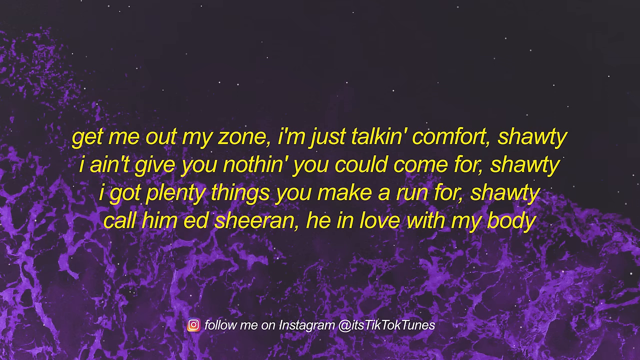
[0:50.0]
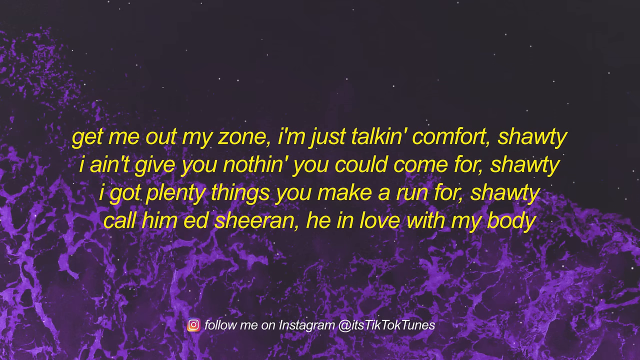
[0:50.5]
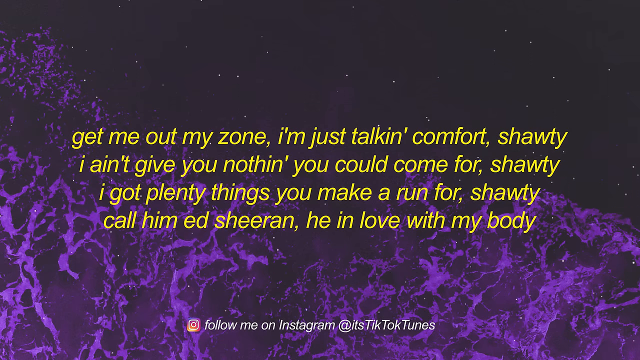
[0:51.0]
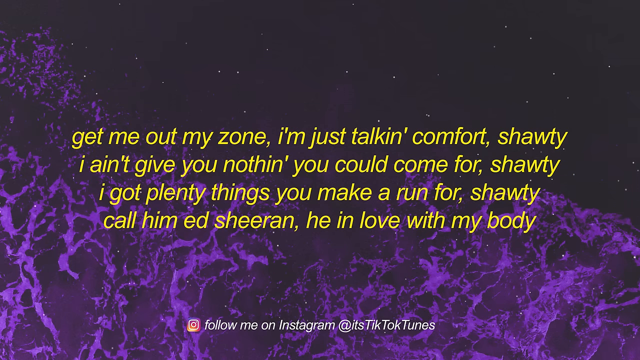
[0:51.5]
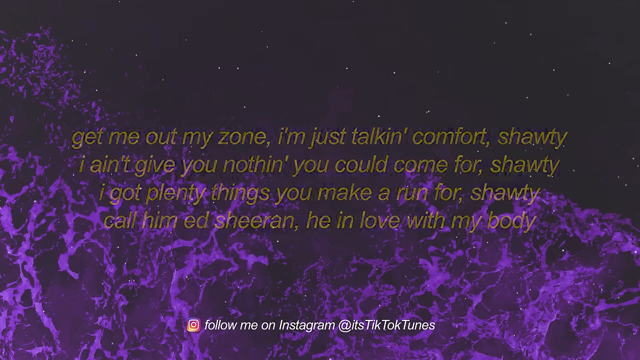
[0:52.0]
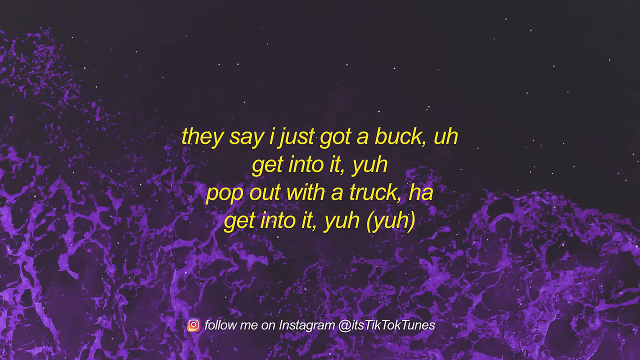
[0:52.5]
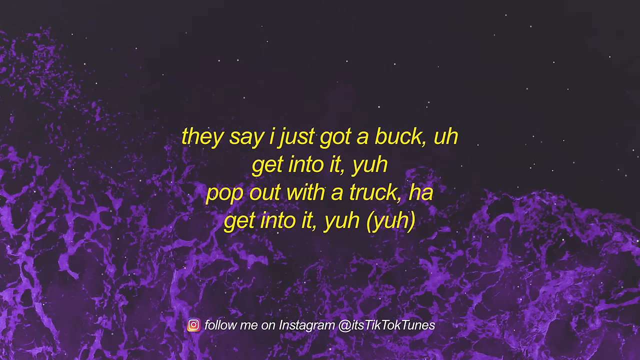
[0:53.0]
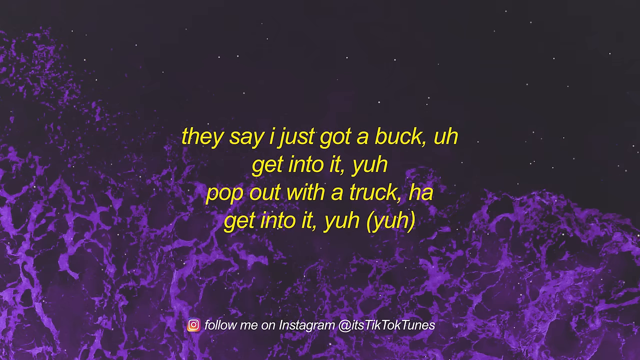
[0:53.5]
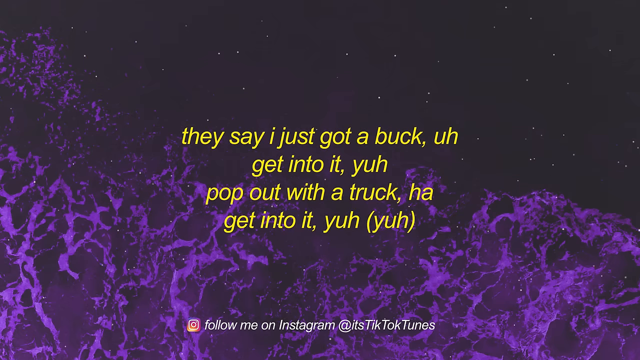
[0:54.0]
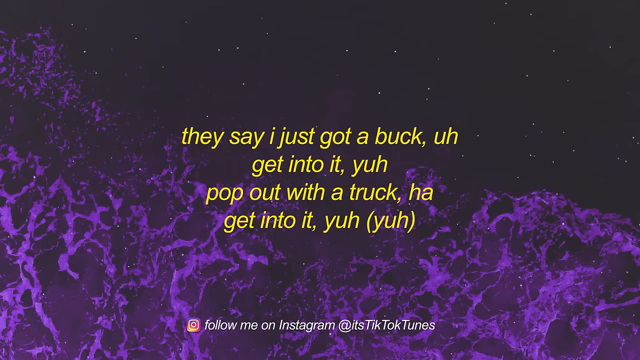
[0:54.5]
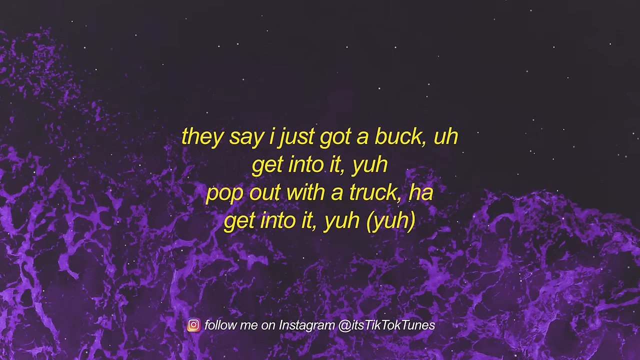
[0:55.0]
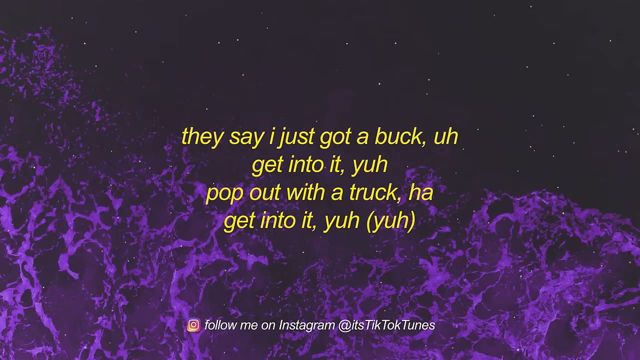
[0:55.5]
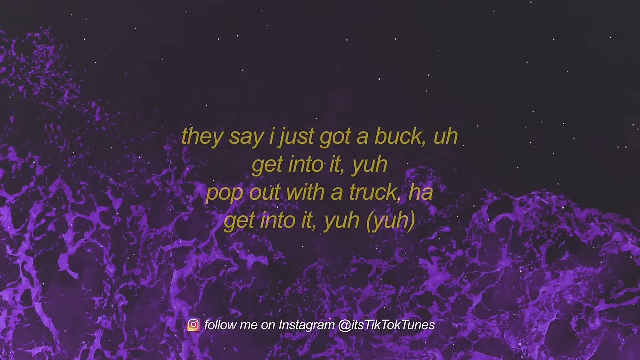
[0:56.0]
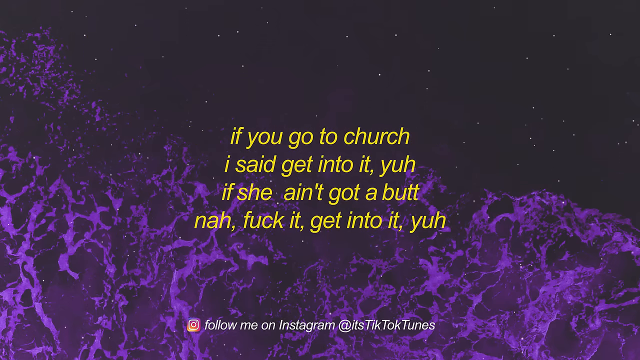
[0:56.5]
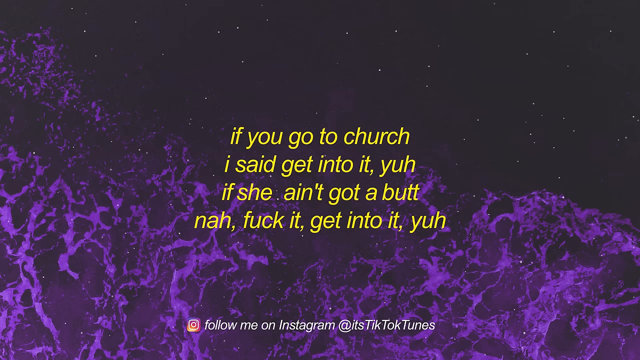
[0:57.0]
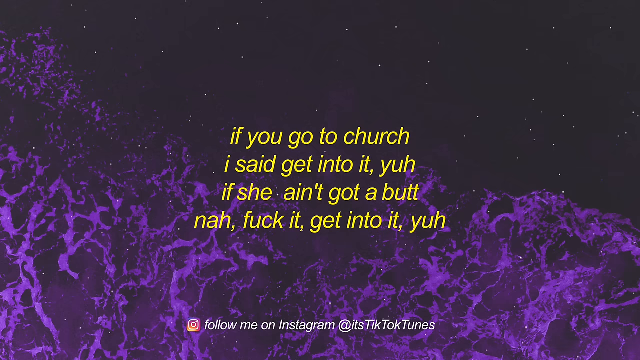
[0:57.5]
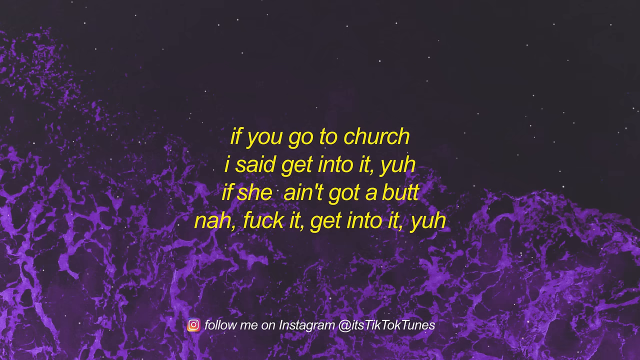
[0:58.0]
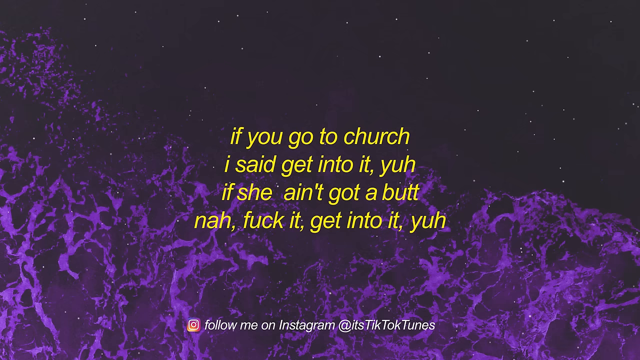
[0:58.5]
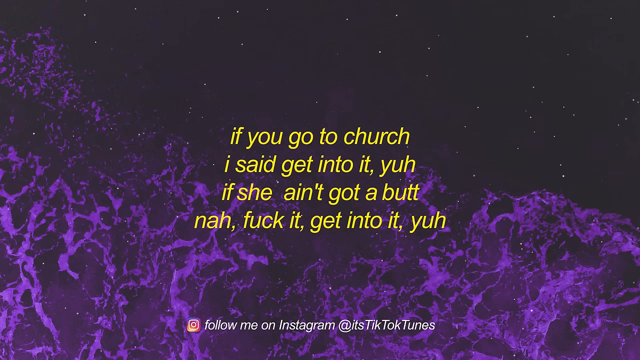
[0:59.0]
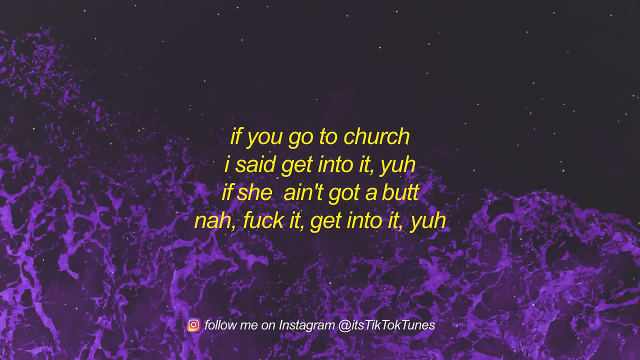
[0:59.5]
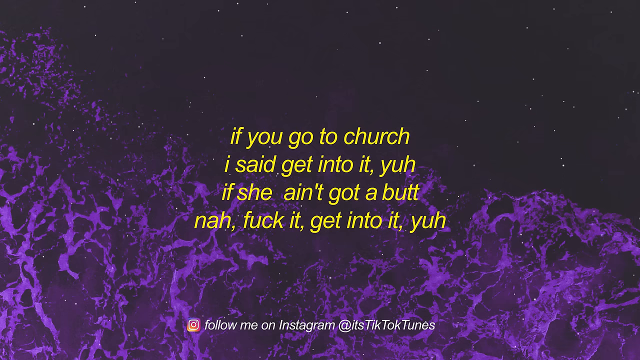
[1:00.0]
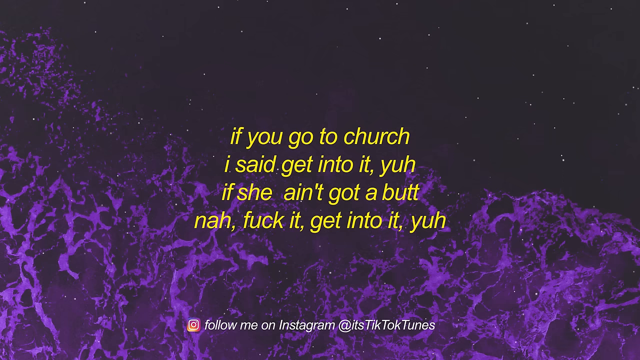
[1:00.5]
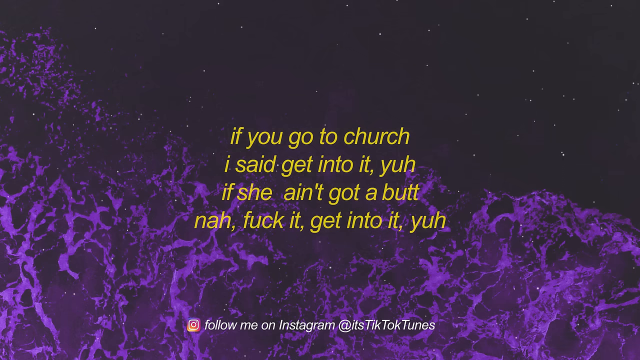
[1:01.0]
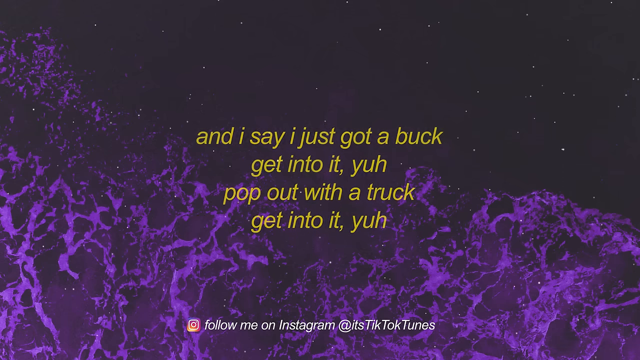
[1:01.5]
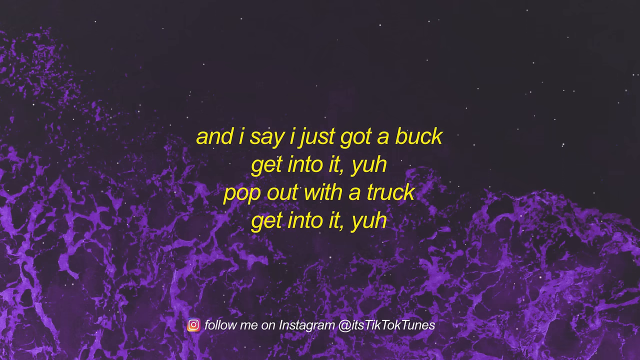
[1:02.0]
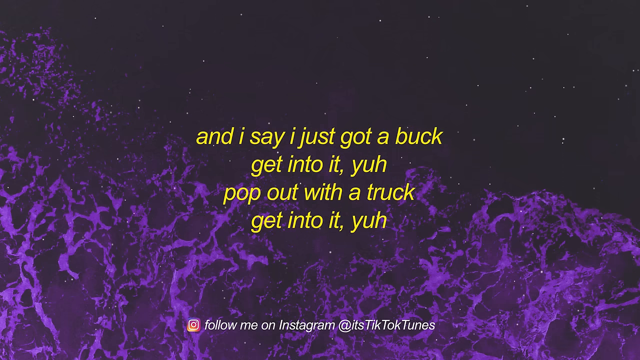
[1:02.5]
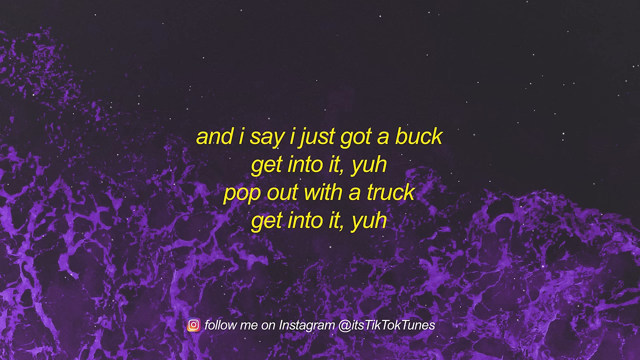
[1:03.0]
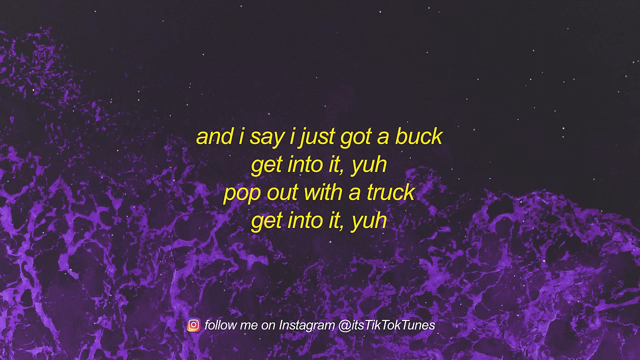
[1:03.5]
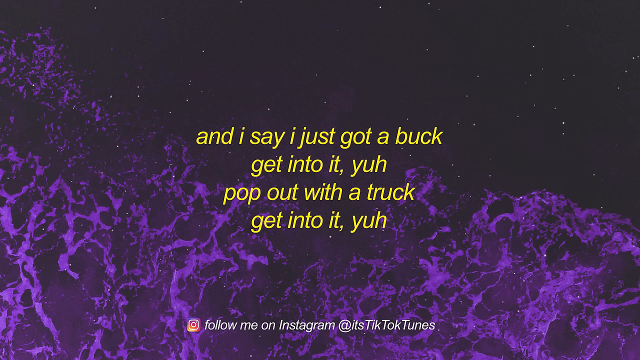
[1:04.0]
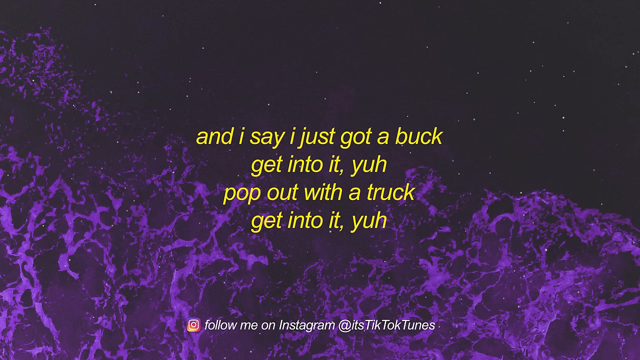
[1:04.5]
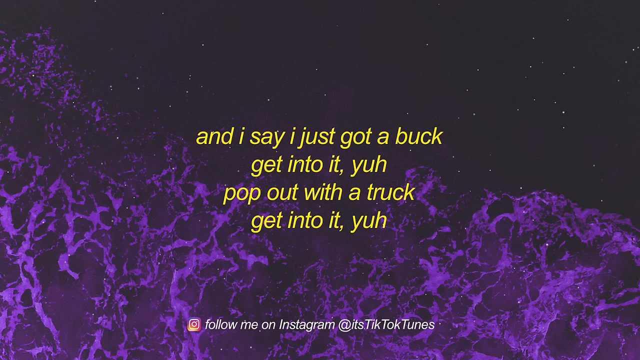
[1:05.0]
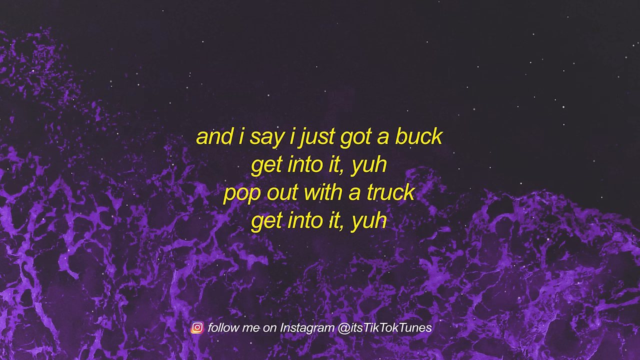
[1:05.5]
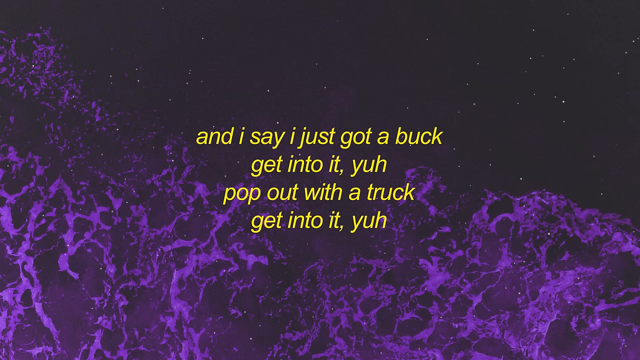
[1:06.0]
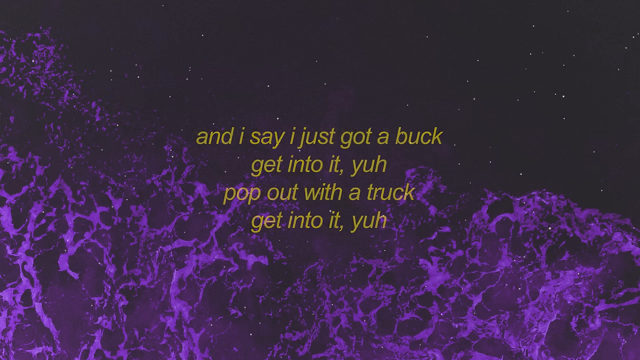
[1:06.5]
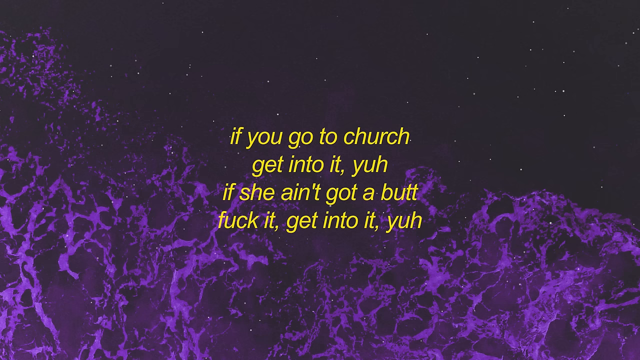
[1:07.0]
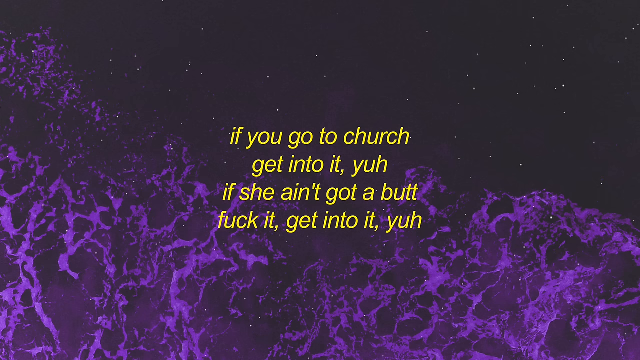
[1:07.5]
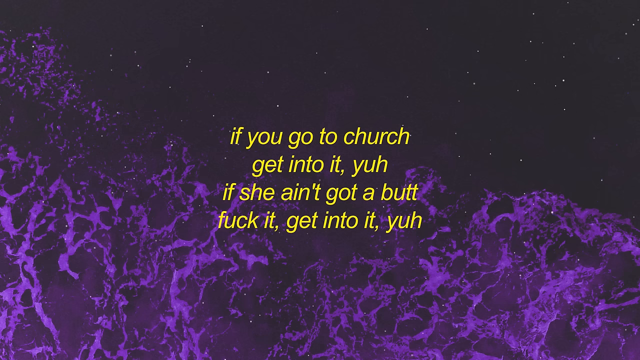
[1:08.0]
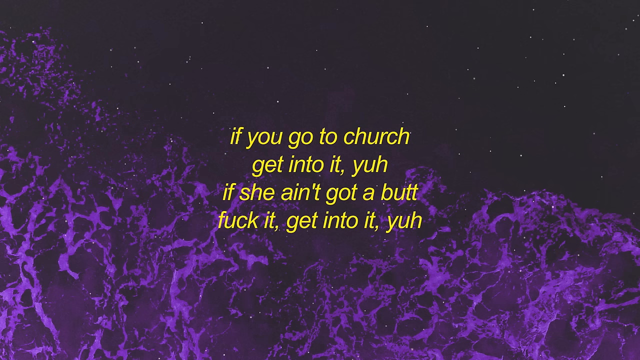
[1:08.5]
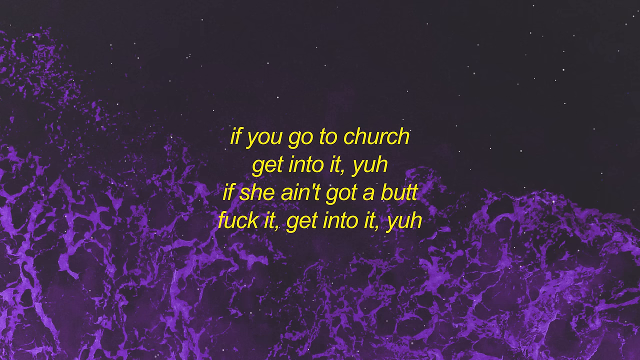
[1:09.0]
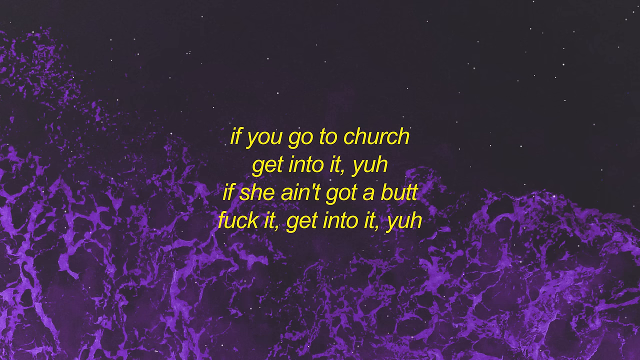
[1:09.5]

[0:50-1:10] Lyrics of a song or poem appear in yellow font, reading "get me out my zone I'm just talking comfort Shanti. I ain't give you nothing. You could come for Shanti I got plenty things you make a run for Shanti call him Ed Sharon. He in love with my body." Next comes "they say I just got a buck get into it. Yeah pop out with a truck. Ha get into it. Yeah. Yeah," then "if you go to church I said get into it. Yeah, if she ain't got a butt now, fuck it get into it Yeah," and "and I say I just got a buck get into it. Yeah pop out with a truck get into it Yeah." The next screen reads "if you go to church get into it Yeah, if she ain't got a butt fuck it get into it Yeah," and the following screen begins "get me out my zone I'm just talking" and continues with "they say get a buck get into it. Yeah pop out with a truck. Ha get into it Yeah, yeah."